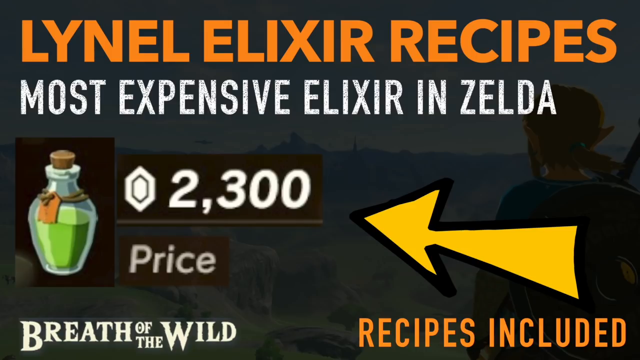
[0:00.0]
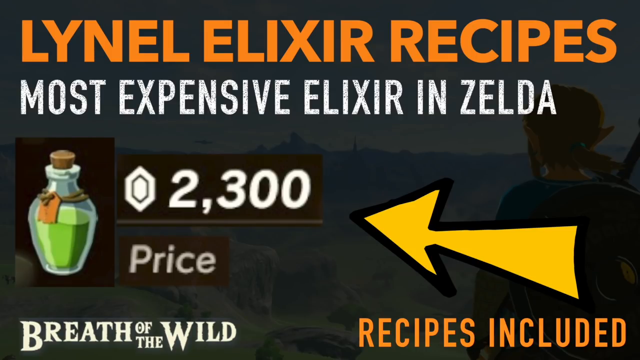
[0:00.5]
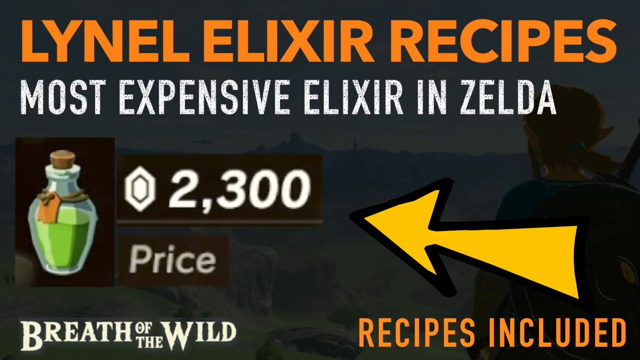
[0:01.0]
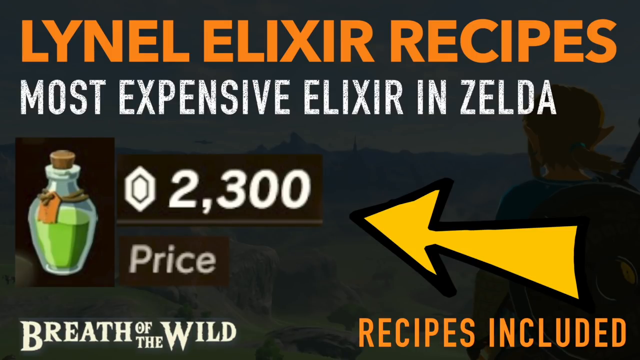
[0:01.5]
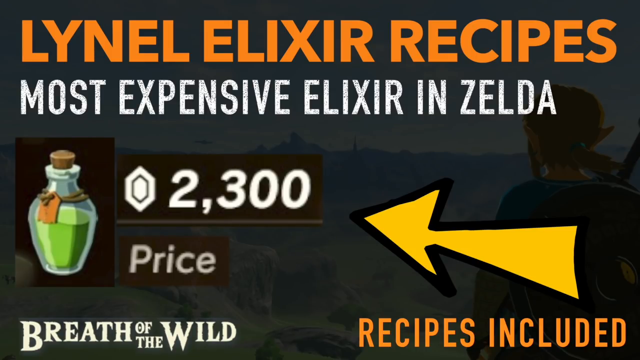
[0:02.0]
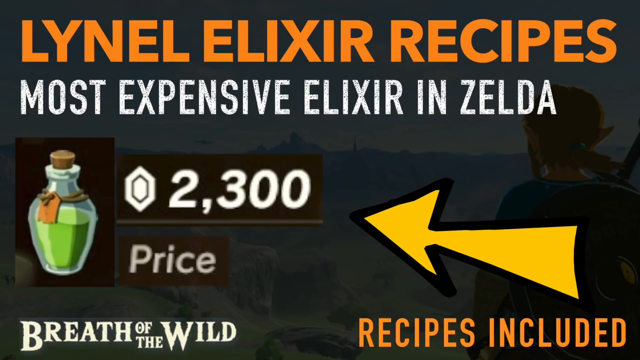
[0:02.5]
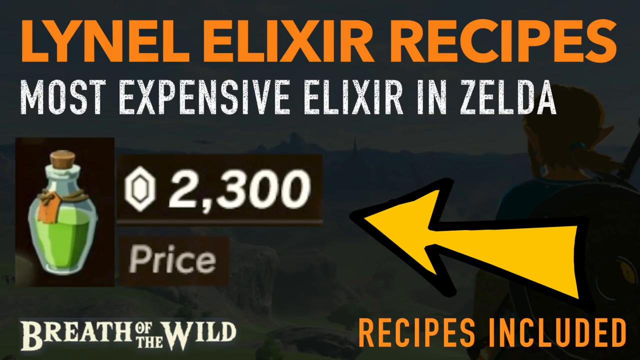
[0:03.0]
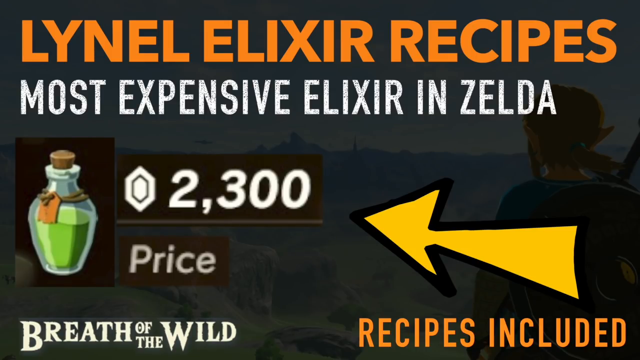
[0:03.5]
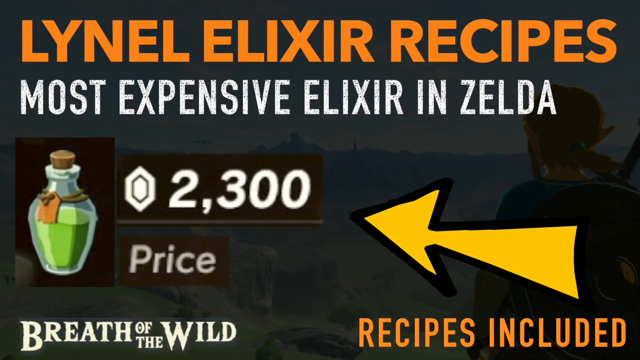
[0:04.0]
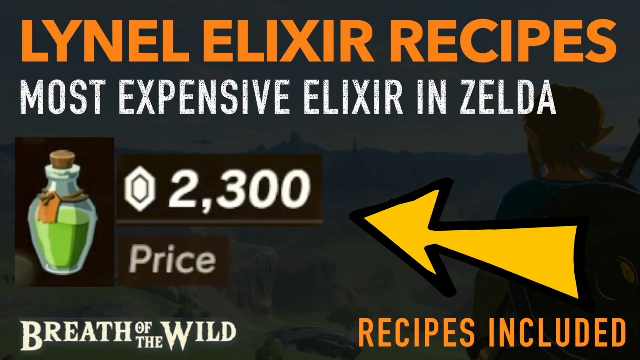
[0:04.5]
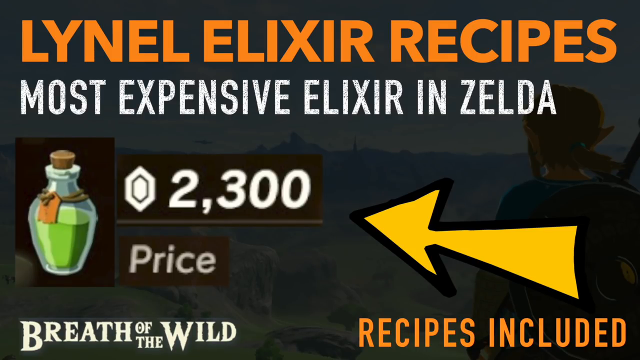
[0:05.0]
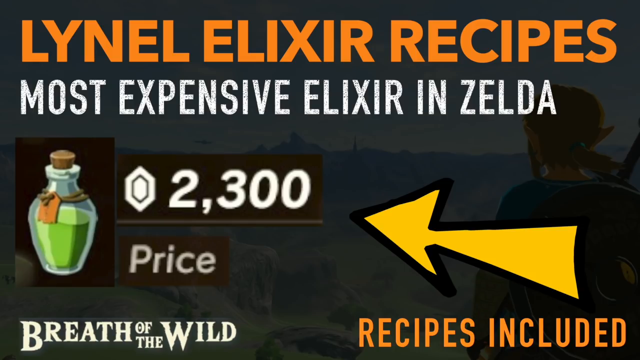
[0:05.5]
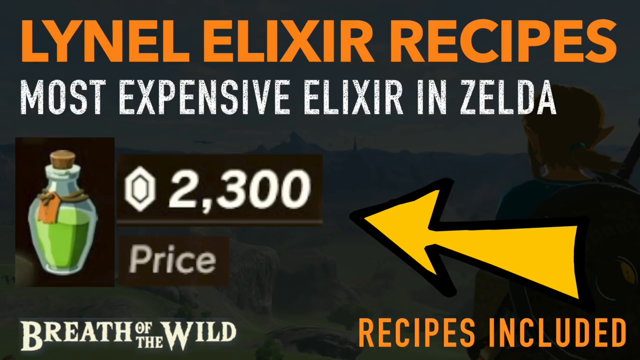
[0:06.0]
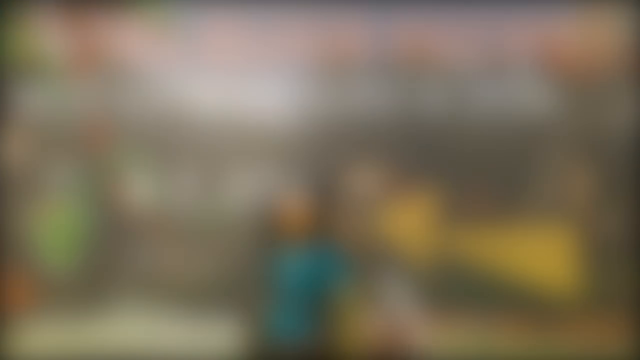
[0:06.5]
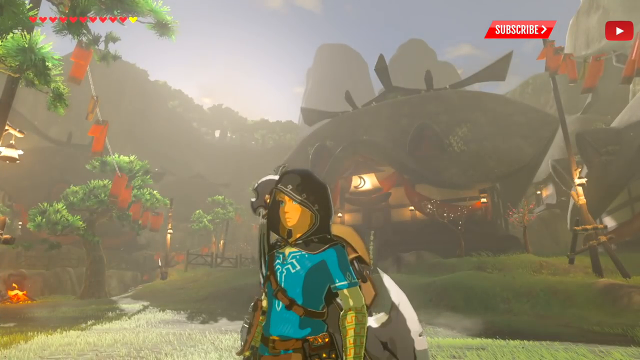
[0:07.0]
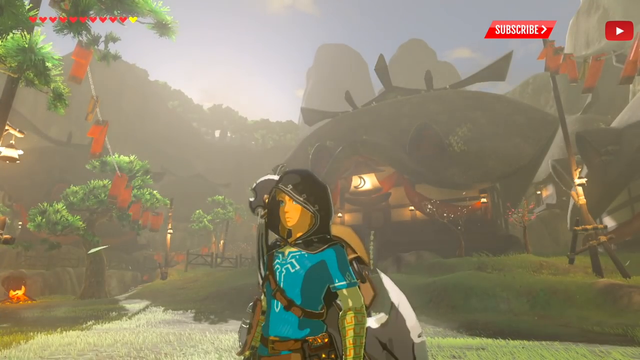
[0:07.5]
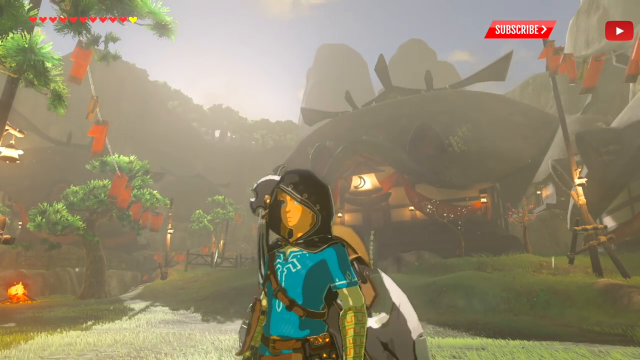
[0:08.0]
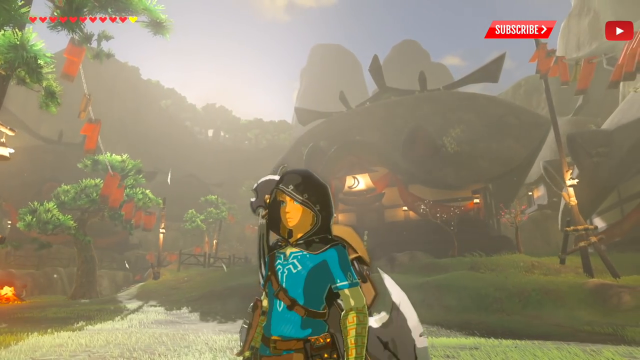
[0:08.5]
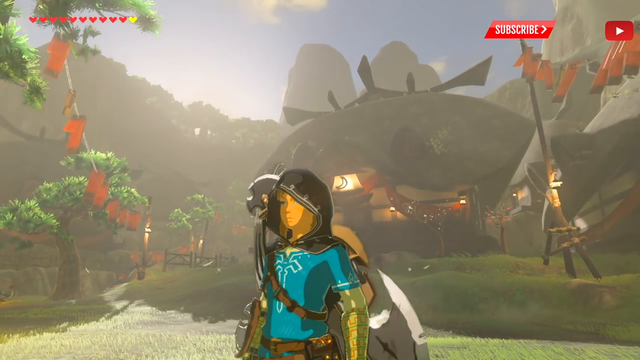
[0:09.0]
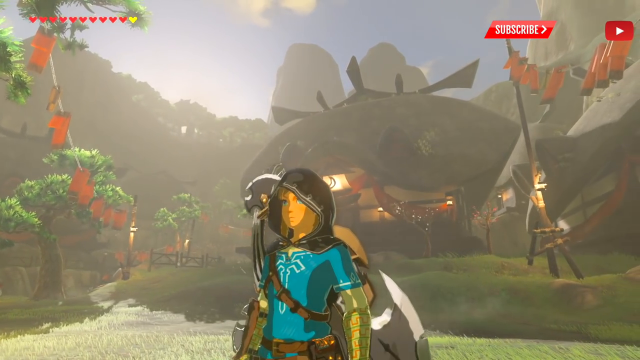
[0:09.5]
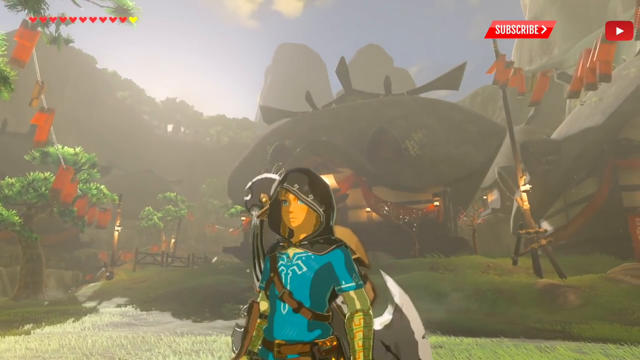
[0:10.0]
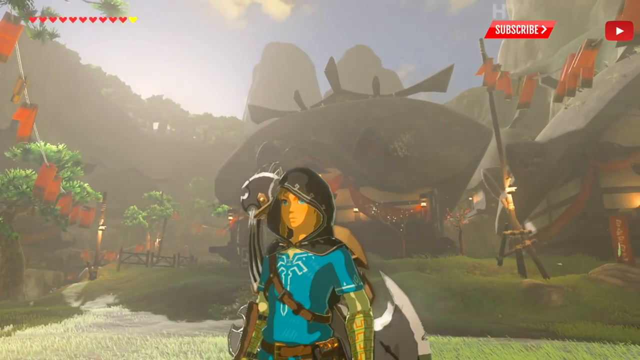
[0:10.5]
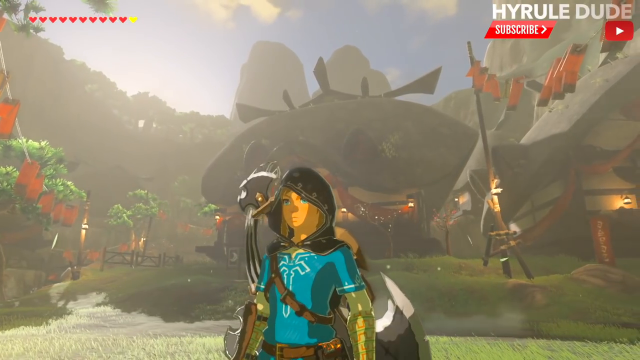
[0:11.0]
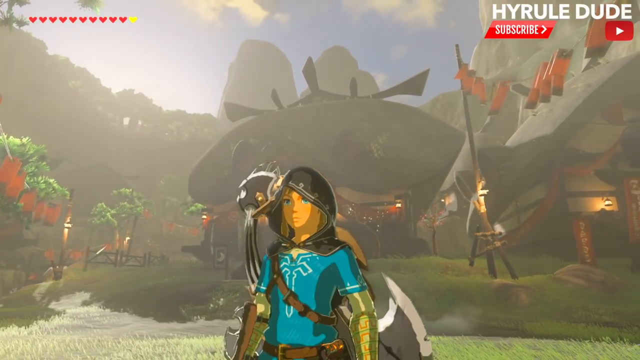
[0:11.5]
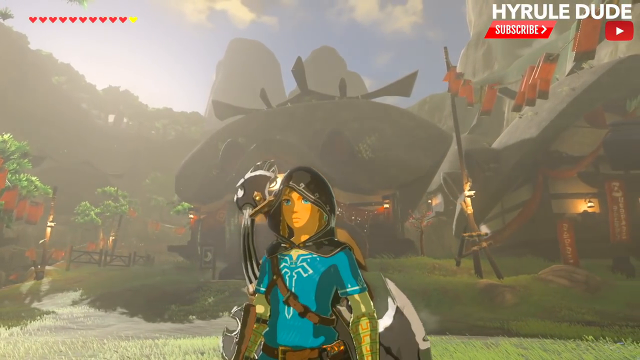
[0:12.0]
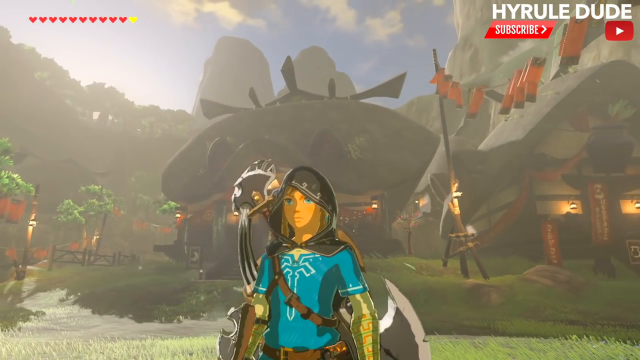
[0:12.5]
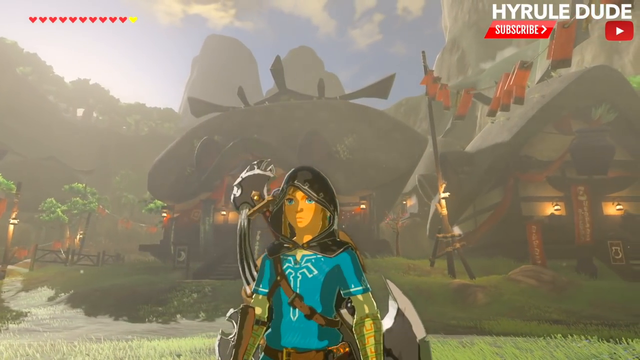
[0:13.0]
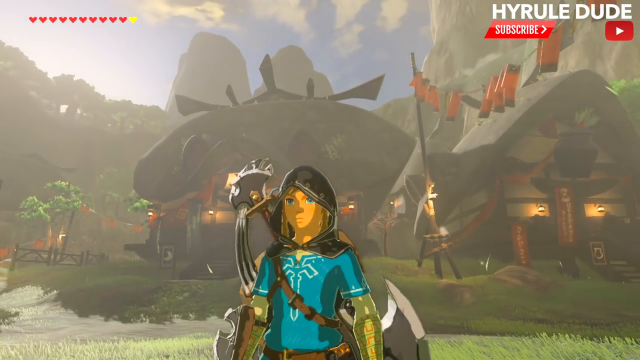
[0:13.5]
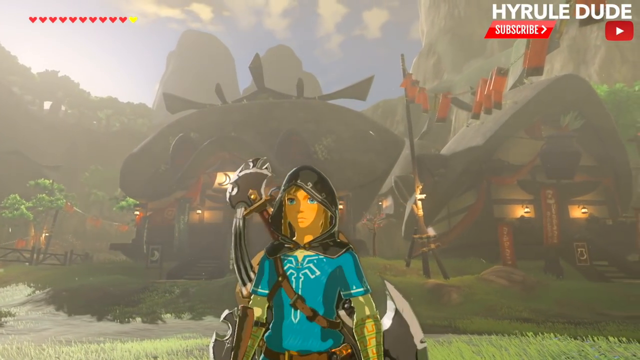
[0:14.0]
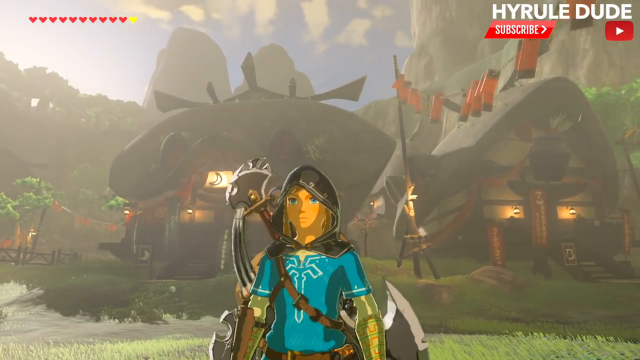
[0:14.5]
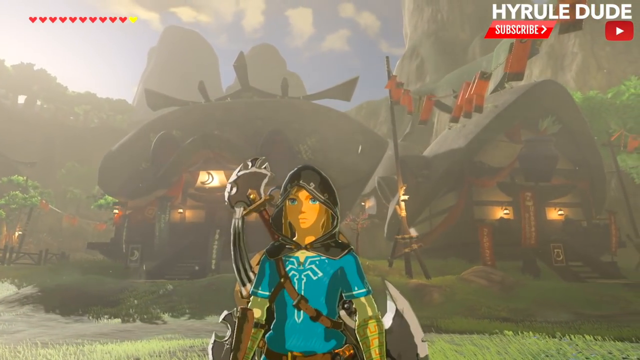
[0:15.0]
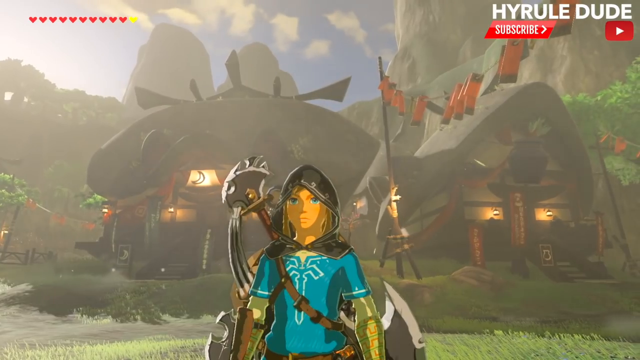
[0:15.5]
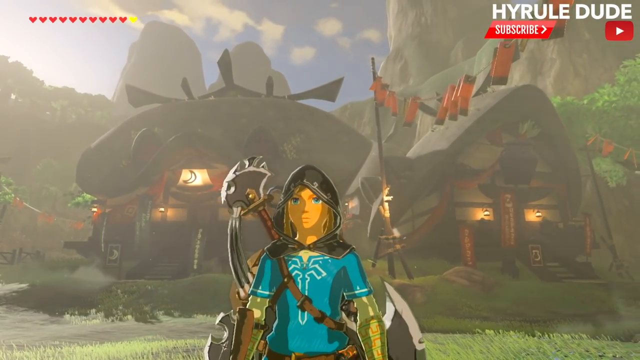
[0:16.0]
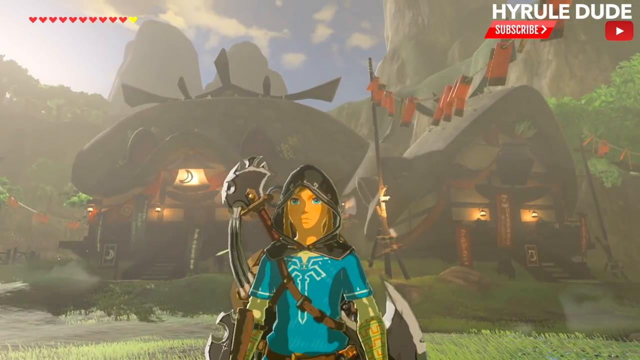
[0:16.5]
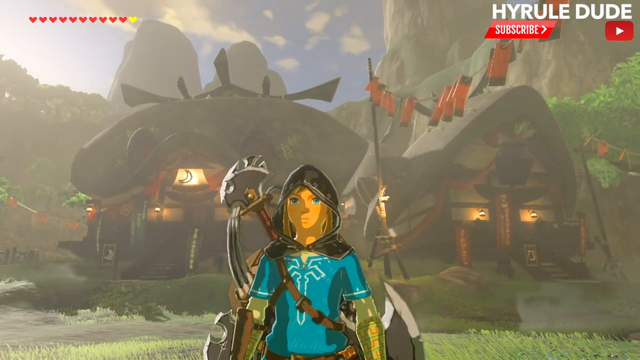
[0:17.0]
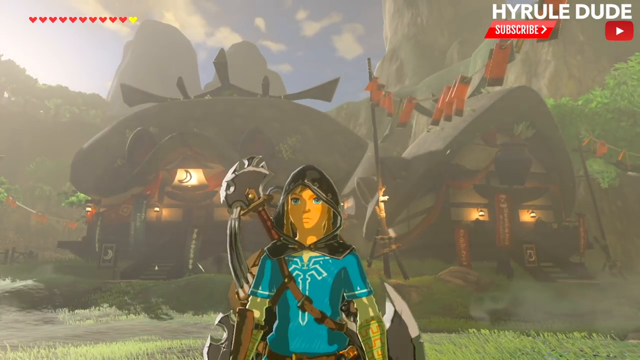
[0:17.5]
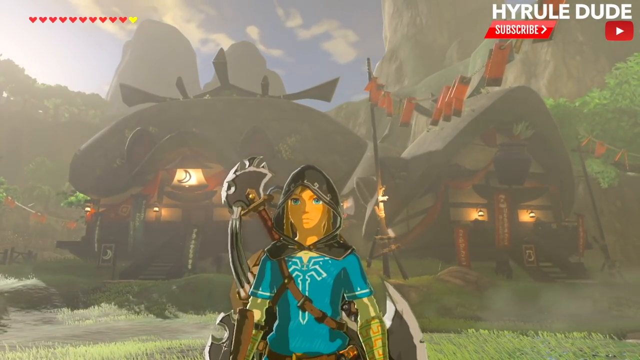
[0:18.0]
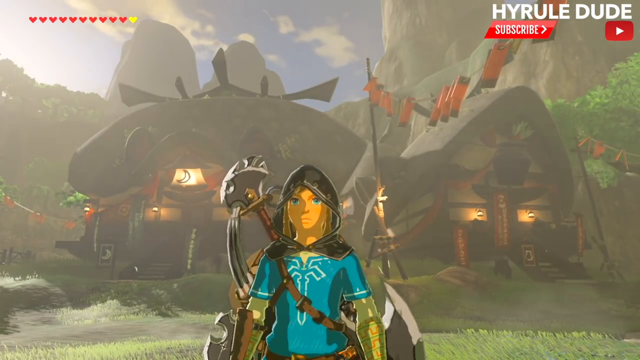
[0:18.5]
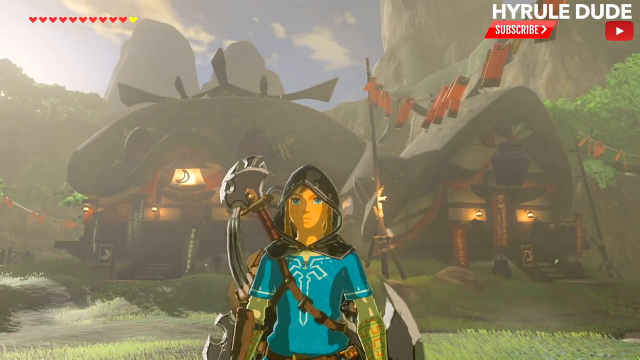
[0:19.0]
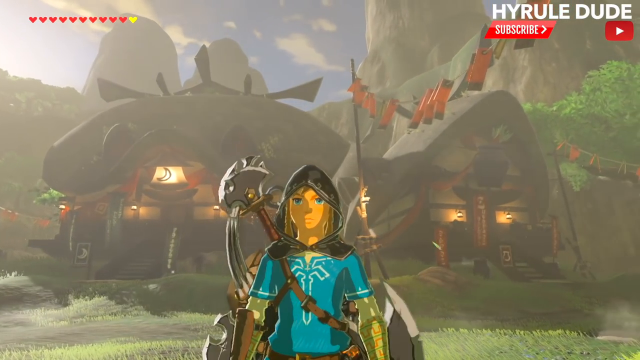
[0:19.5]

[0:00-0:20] The video begins with an introductory screen of a video game: a black screen with large capital-letter text across it reading "Linnell elixir recipes, most expensive elixir in Zelda, price 2300." A bottle with a cork in it holds a green liquid, and a yellow arrow points from the right side of the screen toward the bottle on the left. The screen then transitions to the game itself, showing a person in a blue short-sleeved tunic with a black cloak. The camera pans from right to left around the person, who stands still, blinking. The person has blue eyes. Behind the person is what looks like a thatched-roof hut, with tall trees in the background. On the left, greenish trees are in the foreground. Inside the huts behind the person, fire or flames are visible, like from a stove or wood-burning stove. In the upper right there are clothes, with some orange fabrics hanging out to dry and gently swaying in the wind.